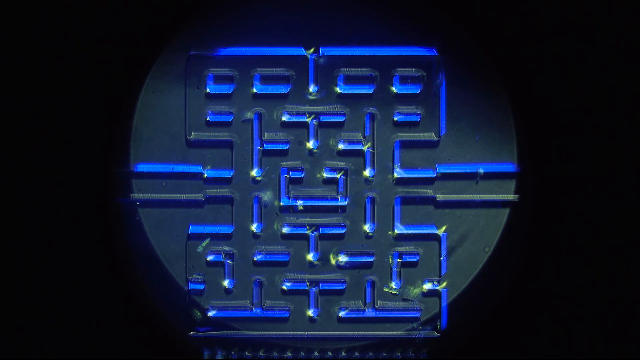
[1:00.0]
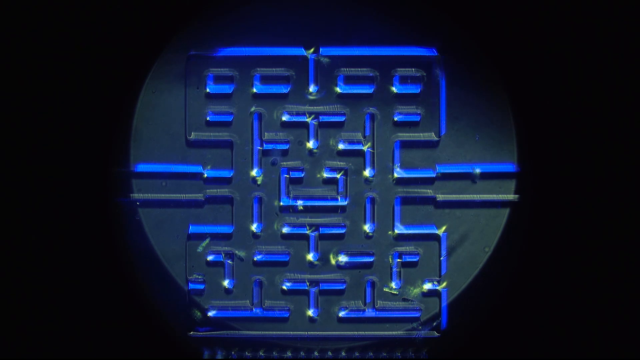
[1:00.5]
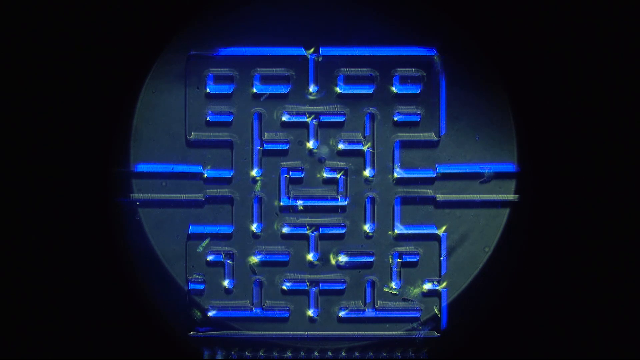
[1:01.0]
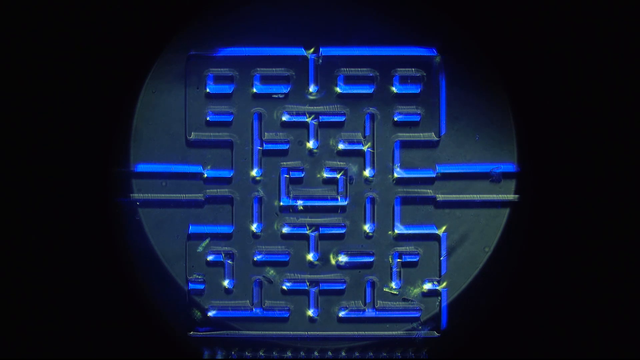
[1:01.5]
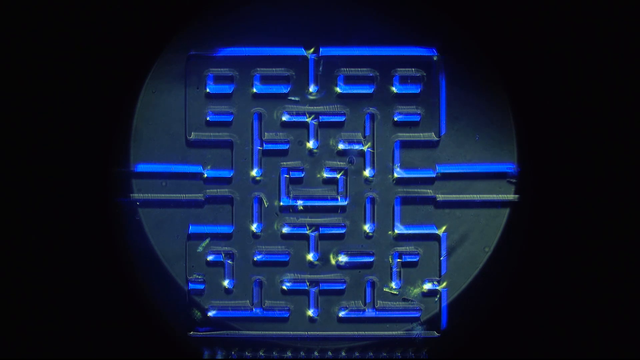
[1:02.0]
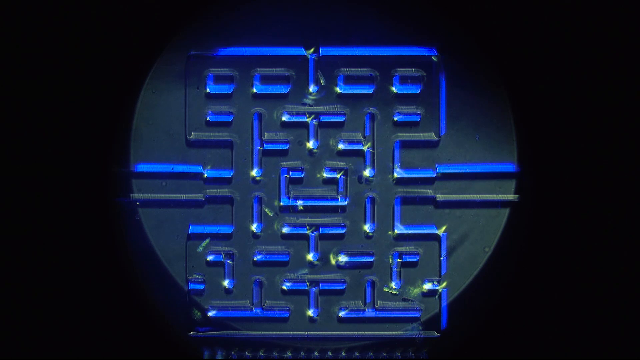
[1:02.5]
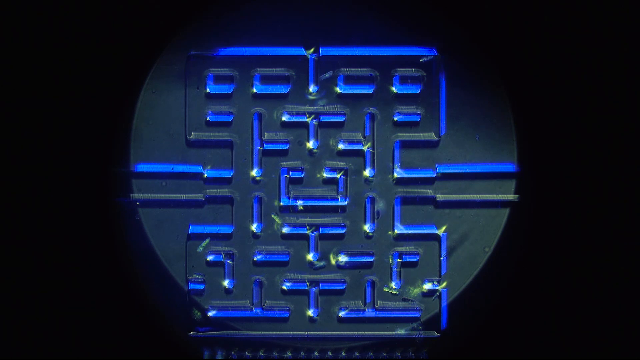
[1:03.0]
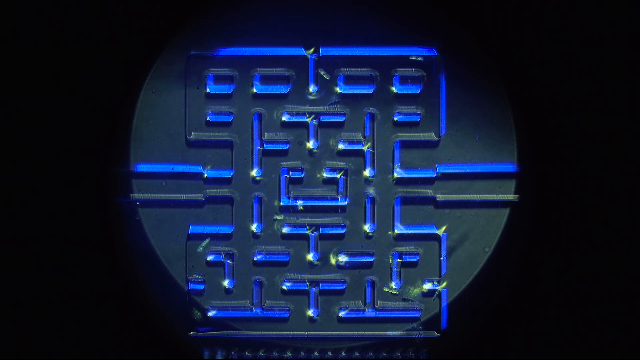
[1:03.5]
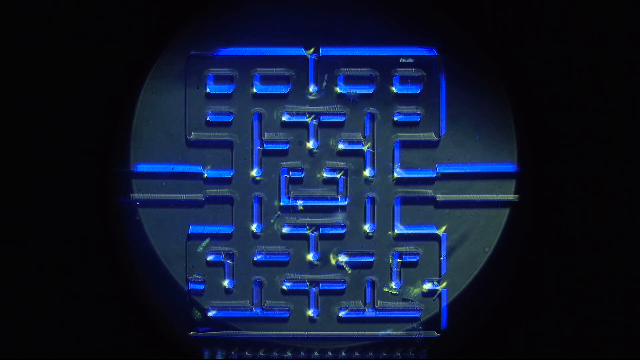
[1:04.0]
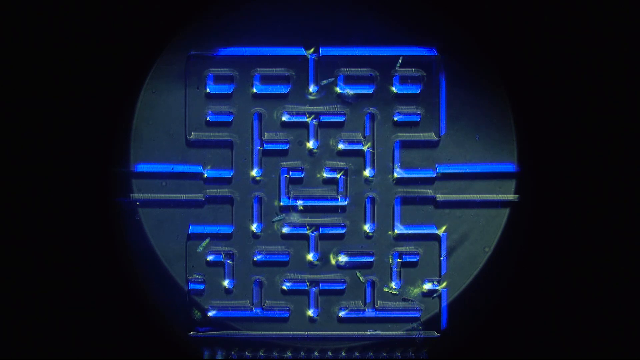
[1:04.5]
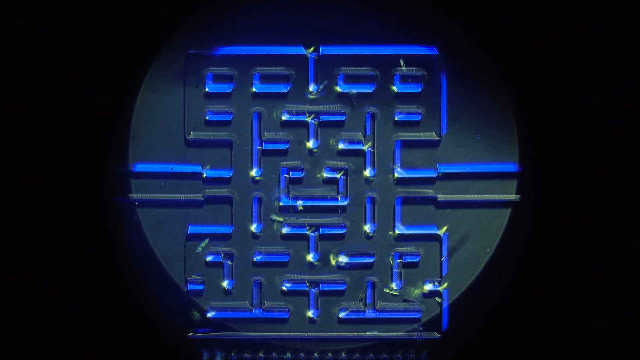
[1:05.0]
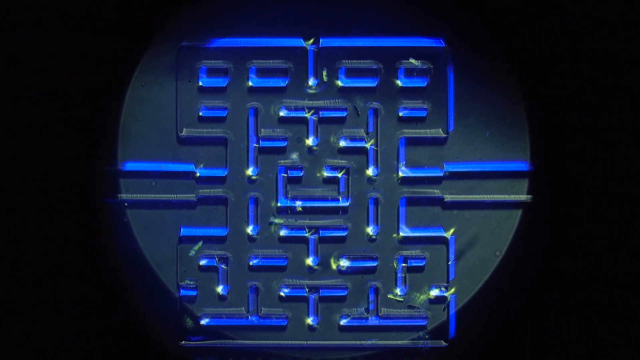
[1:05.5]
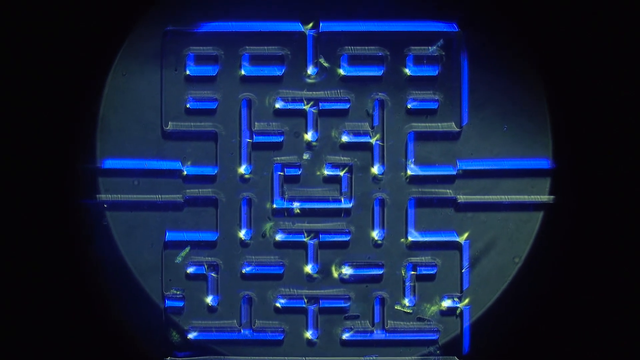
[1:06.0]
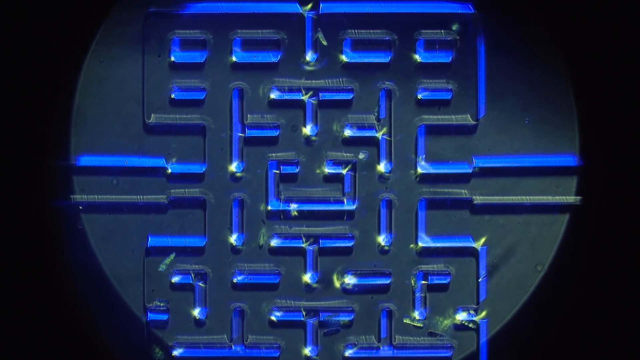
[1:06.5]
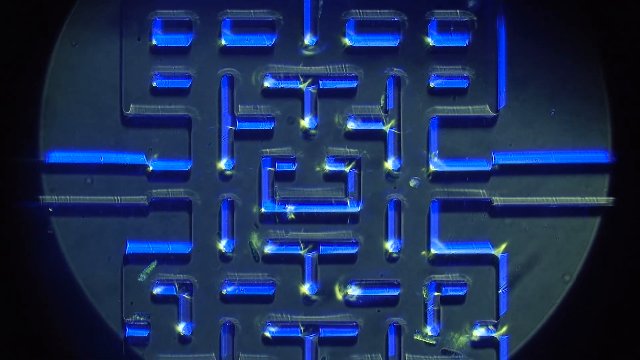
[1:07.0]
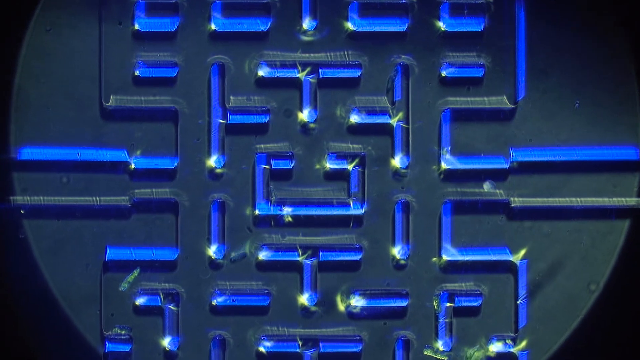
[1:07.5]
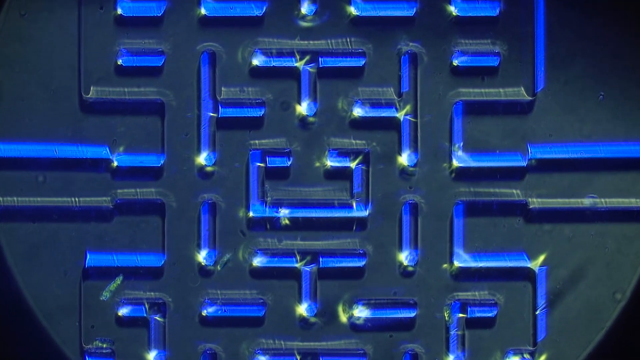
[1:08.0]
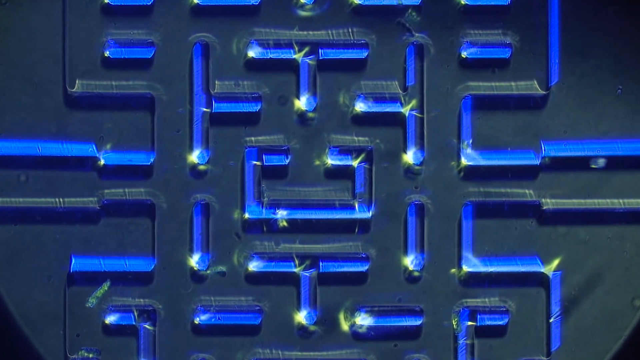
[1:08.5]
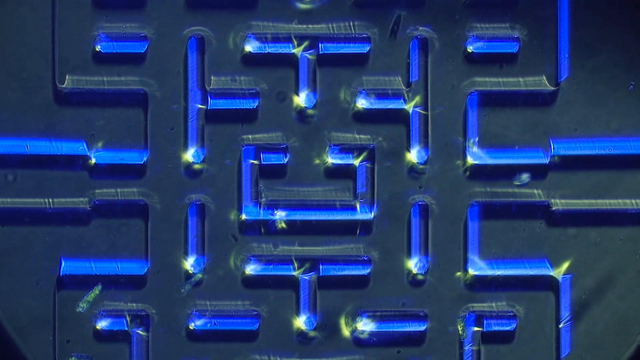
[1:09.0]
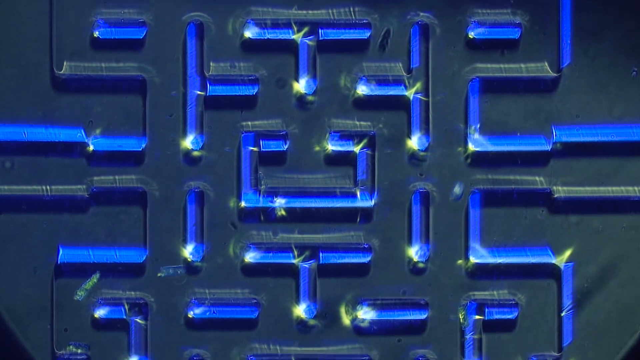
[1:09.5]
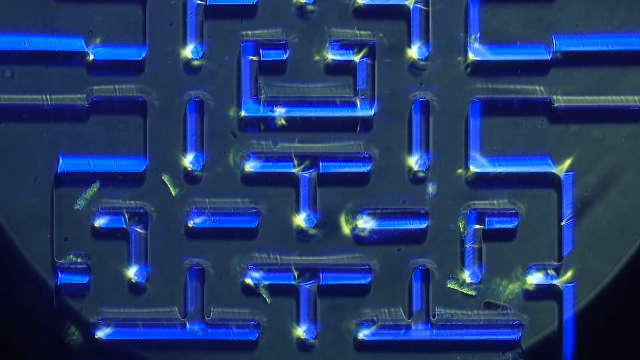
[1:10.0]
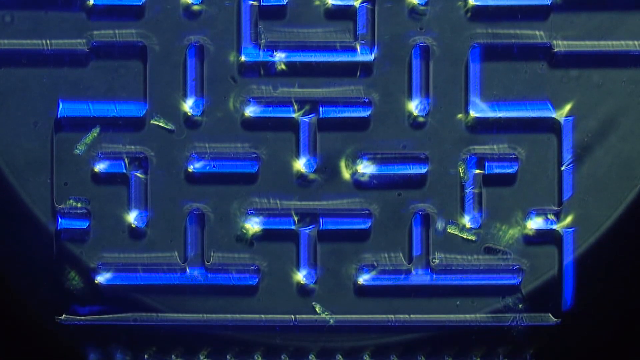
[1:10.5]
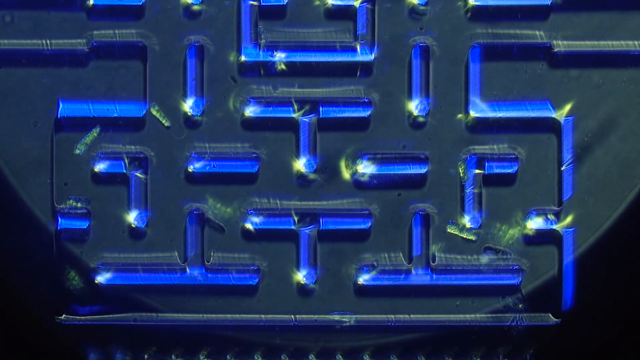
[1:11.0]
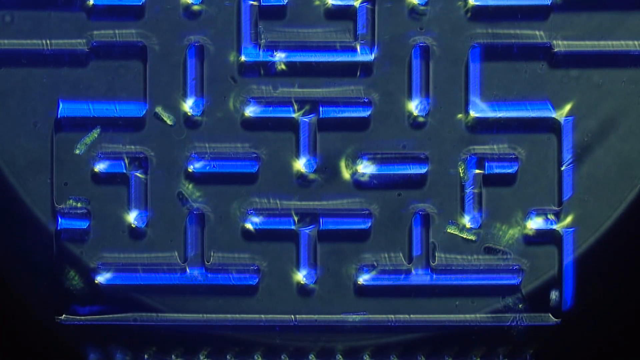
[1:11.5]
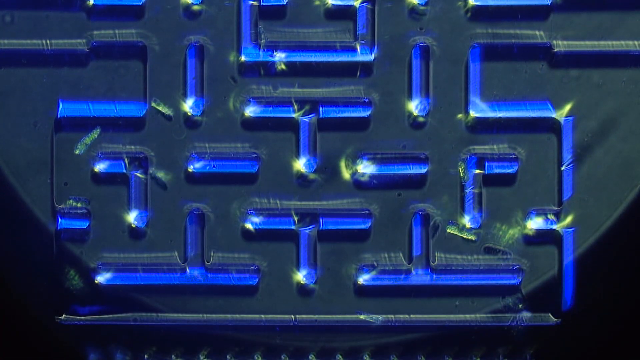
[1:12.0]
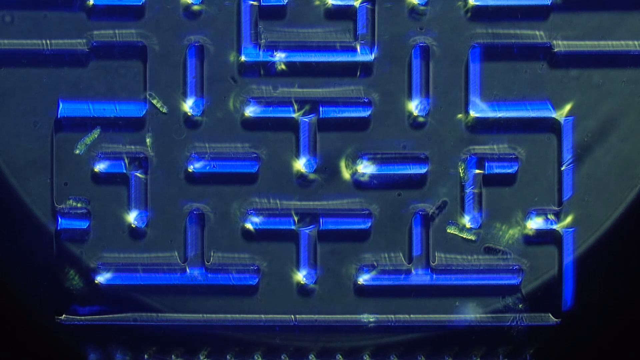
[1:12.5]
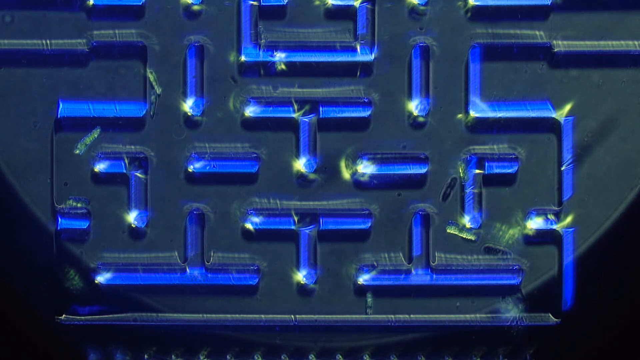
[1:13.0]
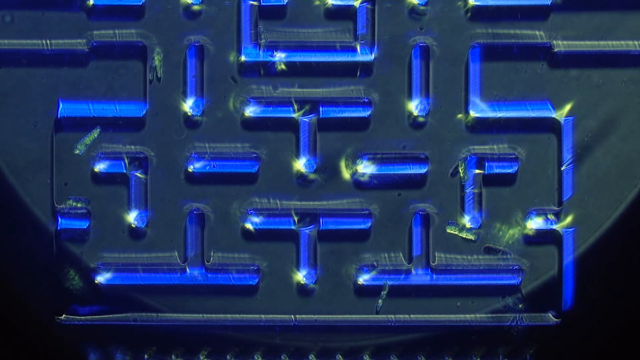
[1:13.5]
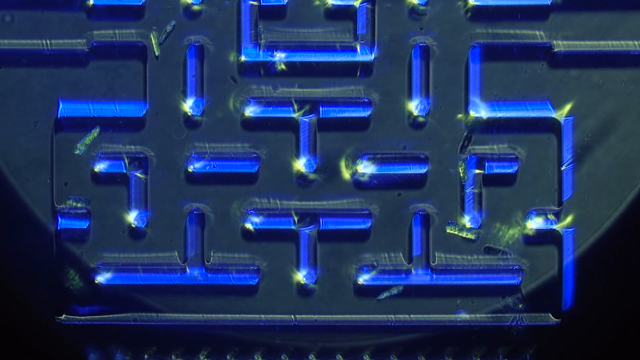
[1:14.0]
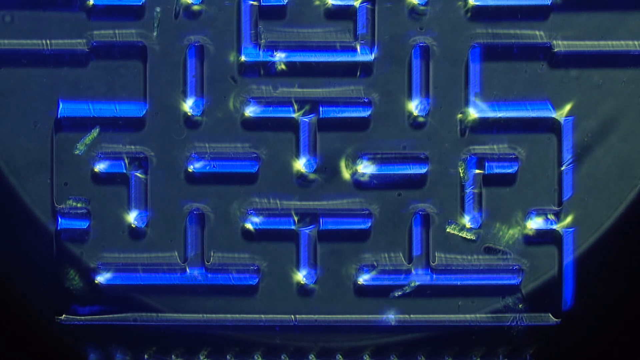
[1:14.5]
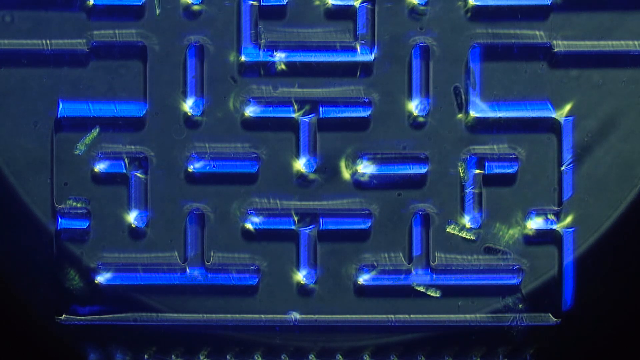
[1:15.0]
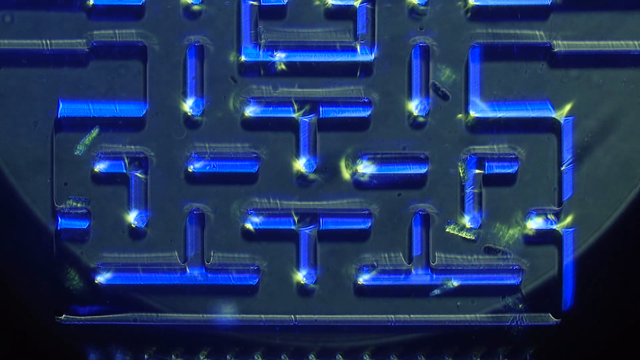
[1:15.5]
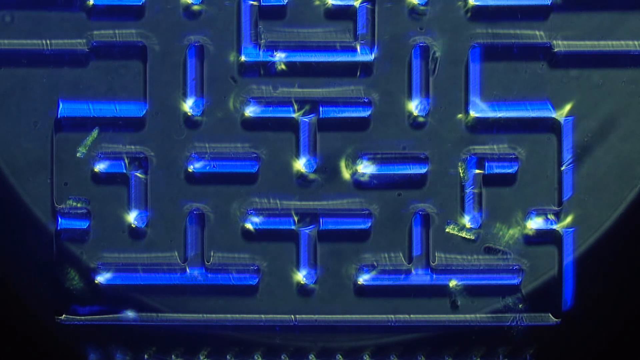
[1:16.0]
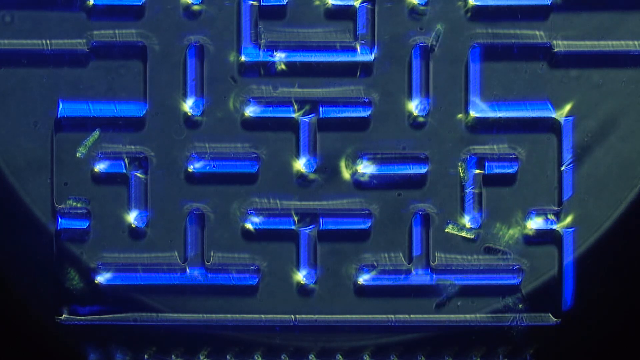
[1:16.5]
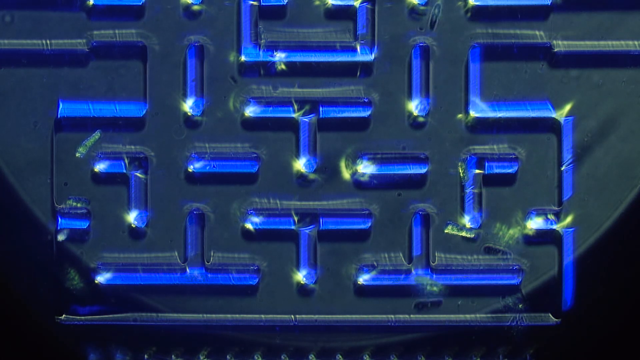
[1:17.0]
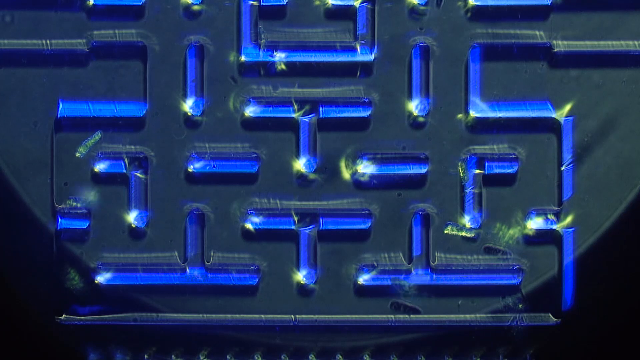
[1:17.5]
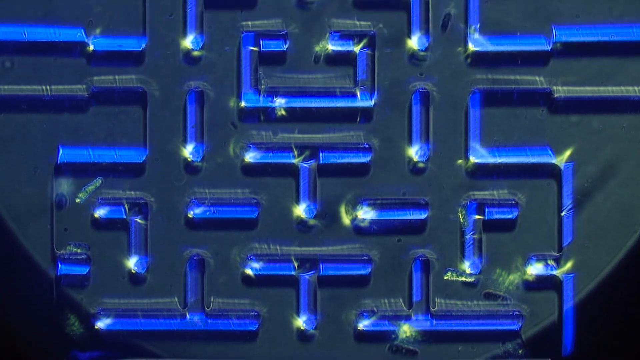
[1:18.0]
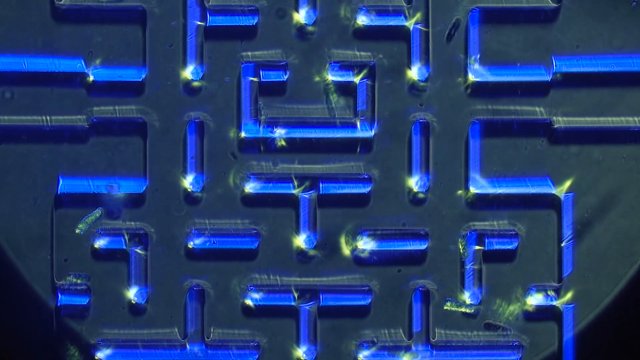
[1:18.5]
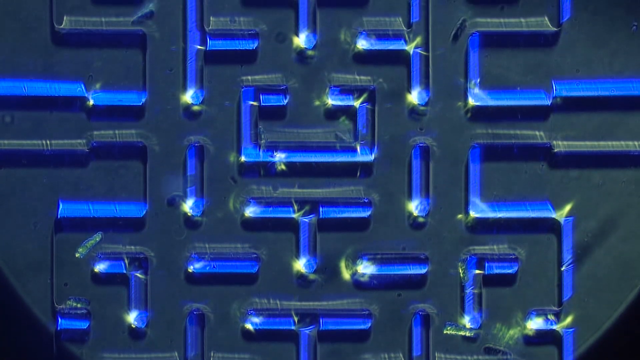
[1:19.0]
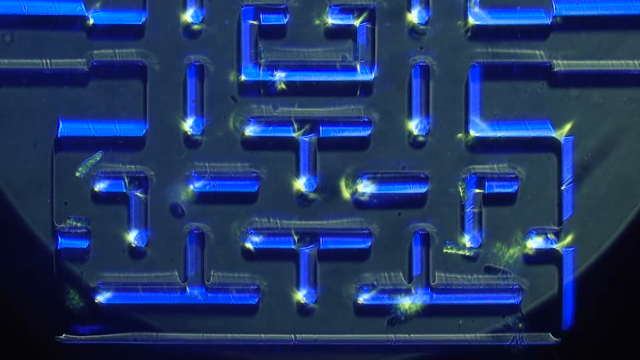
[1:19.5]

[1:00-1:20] The same maze-like structure is shown, with one large out-of-focus shape moving around the block in the center. The camera zooms in on the center of the maze and shows this small shape. It wanders off to the right into the long corridor, doubles back left, and then goes down along the corridor on the right side. It goes all the way down to a corner and rounds it to the right, doubles back briefly, then continues to the left until it reaches the left wall, where it goes up and rounds the corner. It seems to stay attached to the wall for a moment, detaches as it goes around the corner, and shortly reattaches. It goes up around the corner, decouples from the wall again, and then goes sharply down and then to the right.